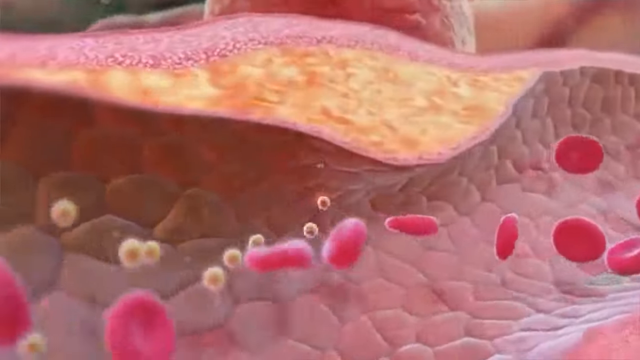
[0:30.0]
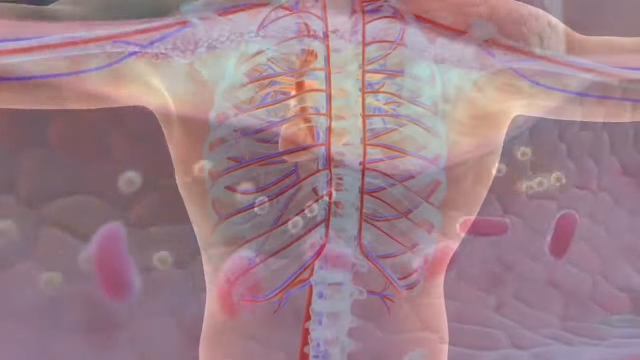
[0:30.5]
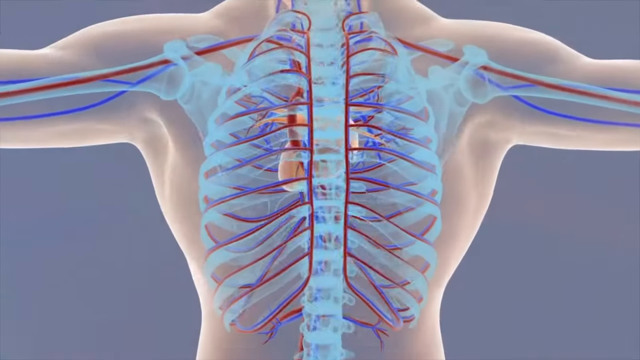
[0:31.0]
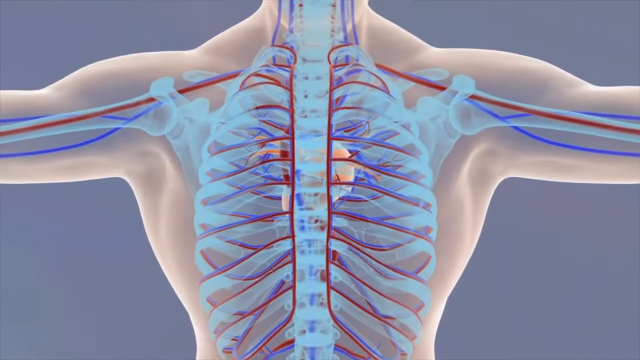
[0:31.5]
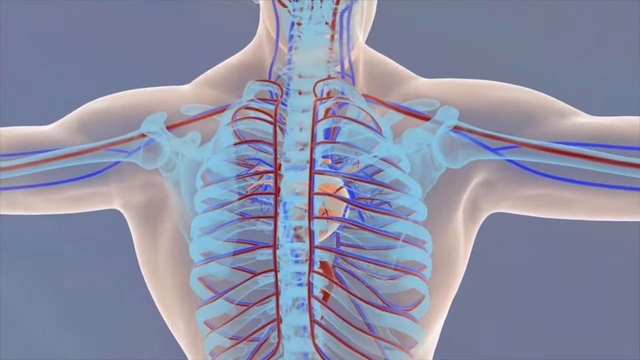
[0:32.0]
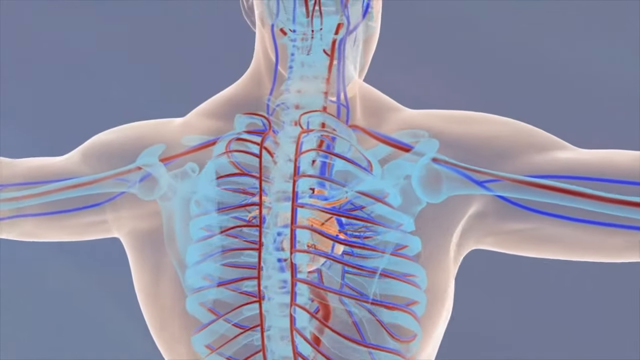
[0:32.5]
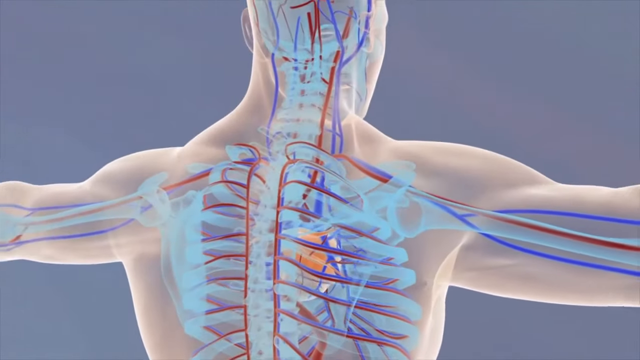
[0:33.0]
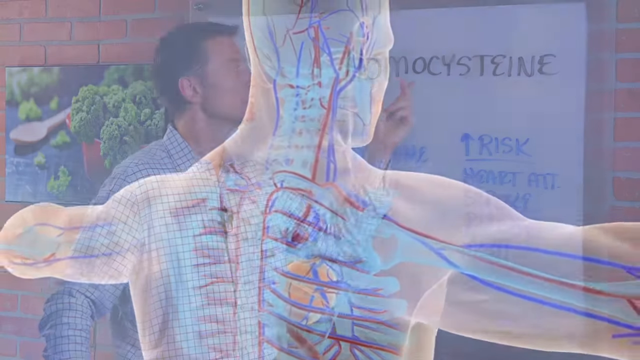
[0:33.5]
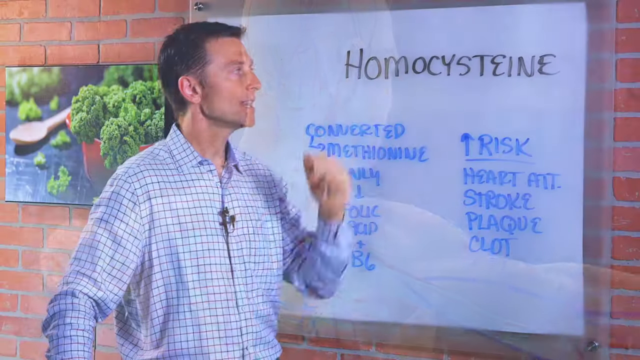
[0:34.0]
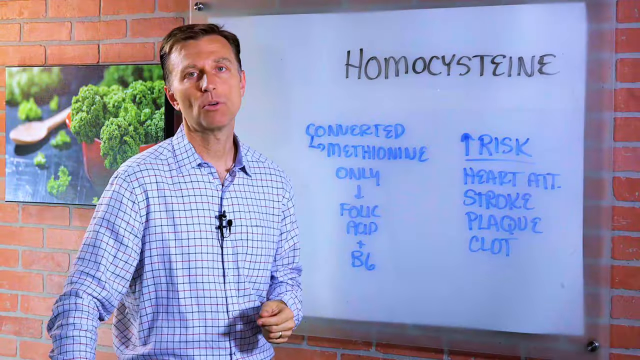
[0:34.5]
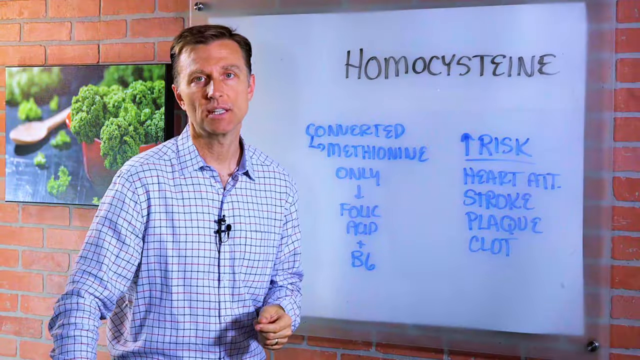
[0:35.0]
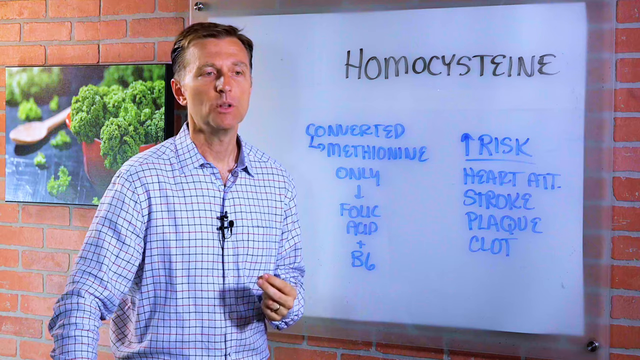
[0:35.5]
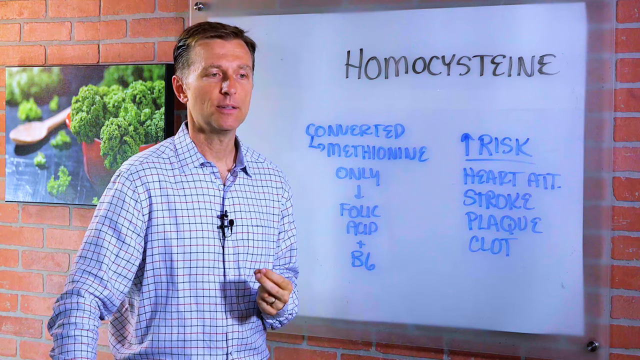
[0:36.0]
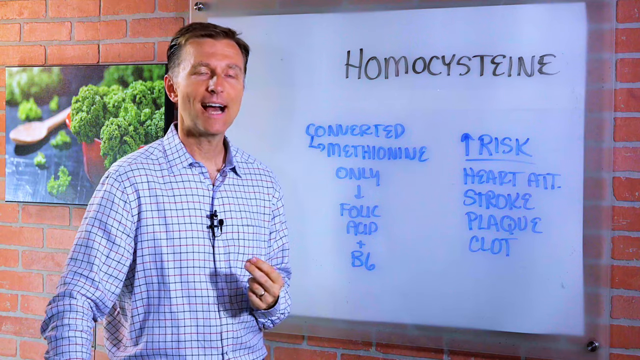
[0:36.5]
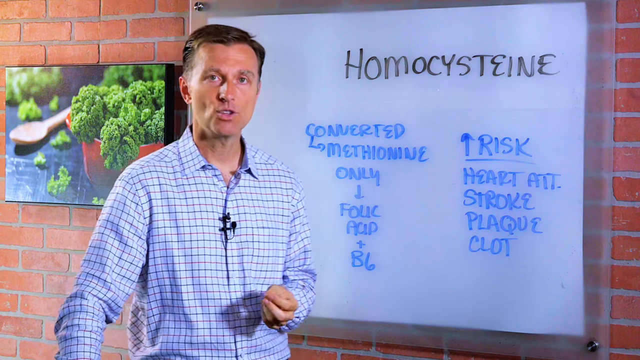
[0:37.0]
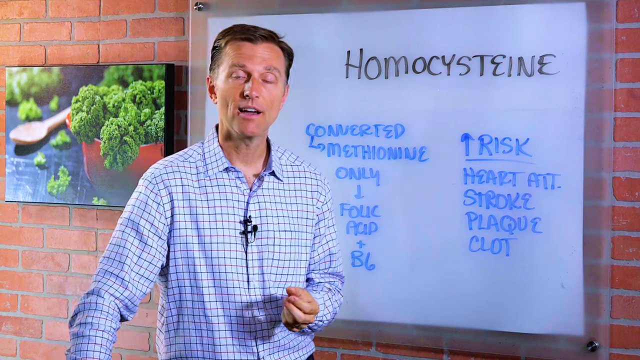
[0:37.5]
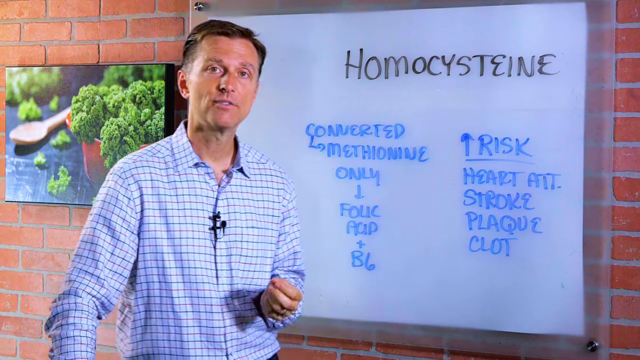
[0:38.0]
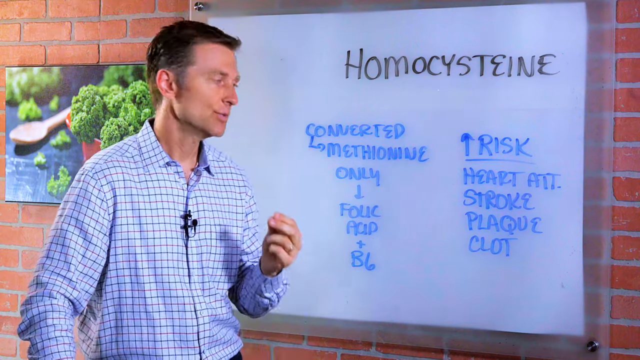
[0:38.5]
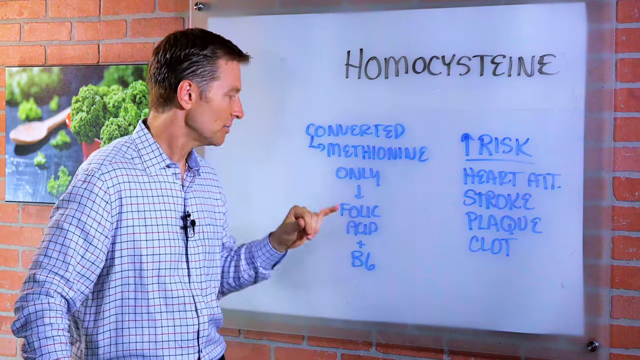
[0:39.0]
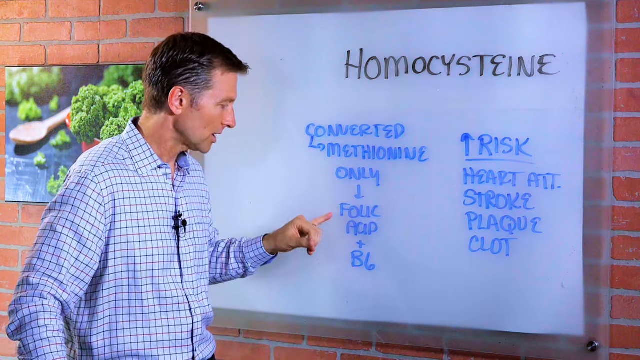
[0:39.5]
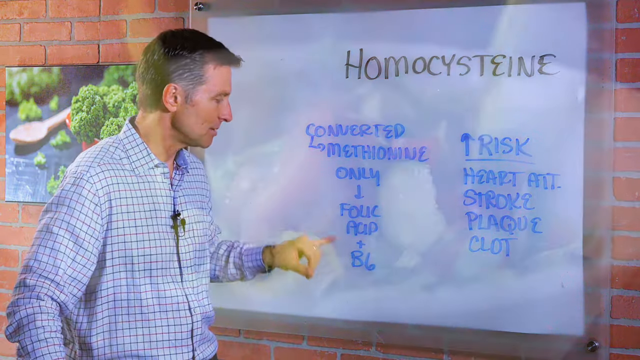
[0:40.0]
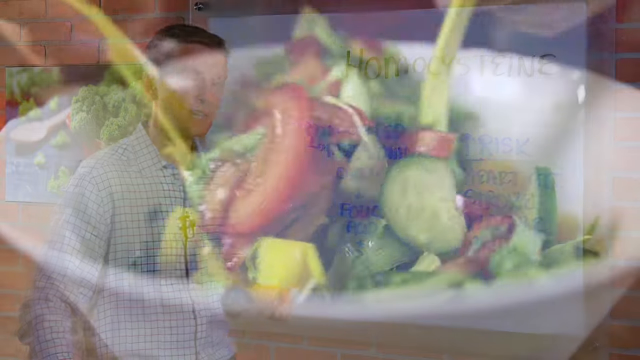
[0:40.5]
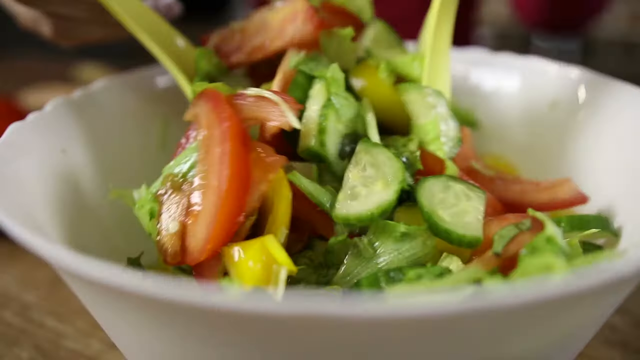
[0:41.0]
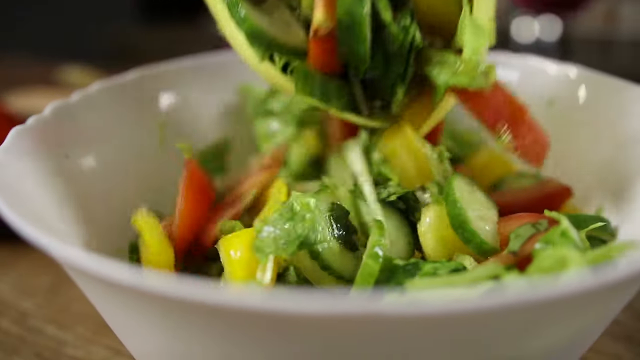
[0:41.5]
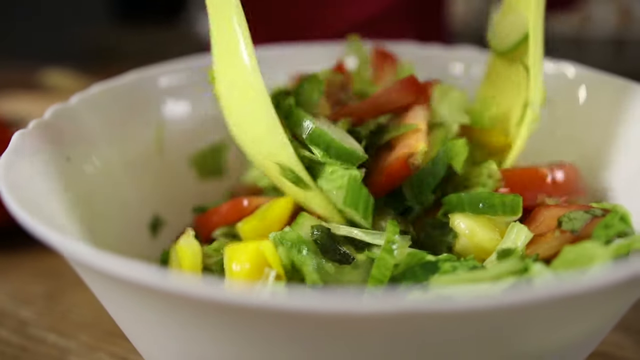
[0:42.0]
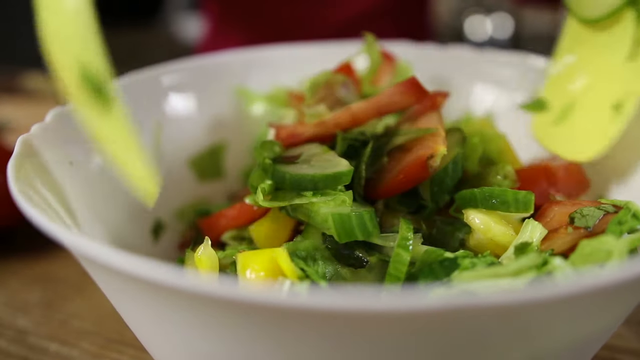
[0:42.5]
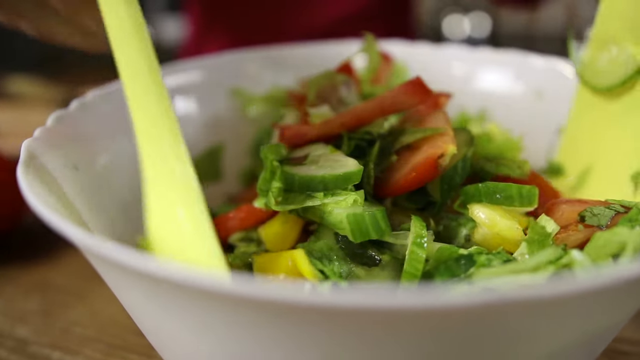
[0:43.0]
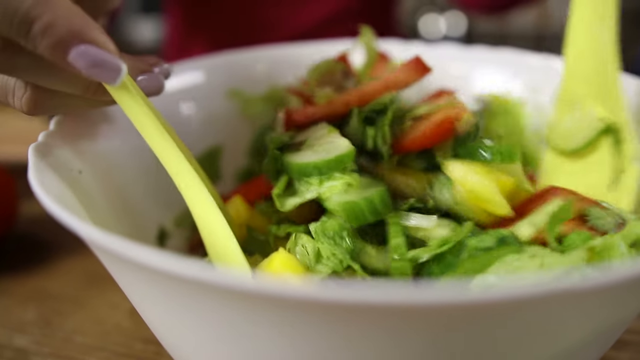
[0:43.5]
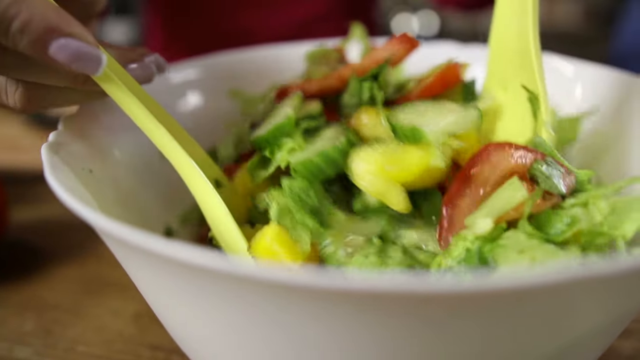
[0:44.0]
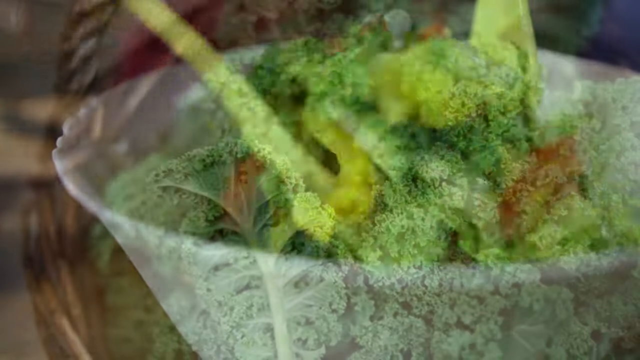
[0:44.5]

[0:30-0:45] The animation shows blood flow throughout the body, tracing the path from the arms and chest to the heart and ultimately to the brain. The video cuts back to Dr. Berg, who points to the word "risk" on the whiteboard, underlining it and showing an upward arrow. He then shifts his focus to "folic acid." Next, the video transitions to a shot of mixed vegetables being stirred in a bowl, with a spoon serving the vegetables, and ends with a close-up of broccoli.